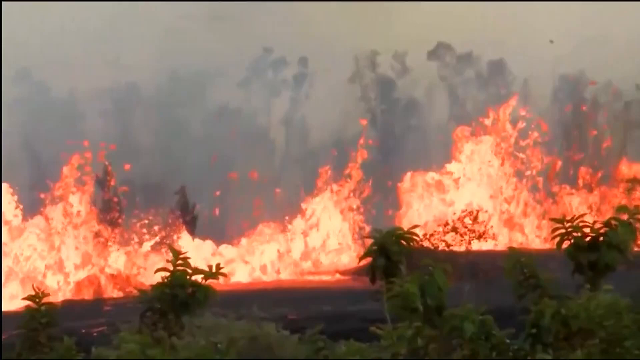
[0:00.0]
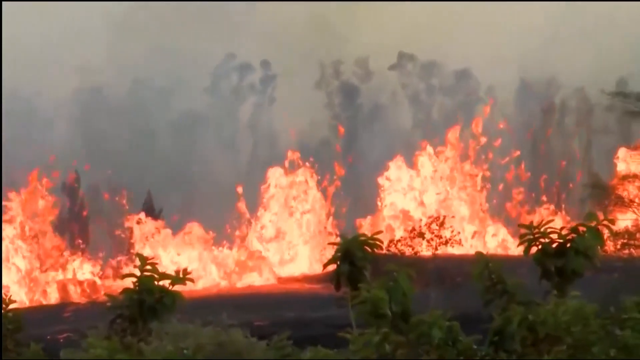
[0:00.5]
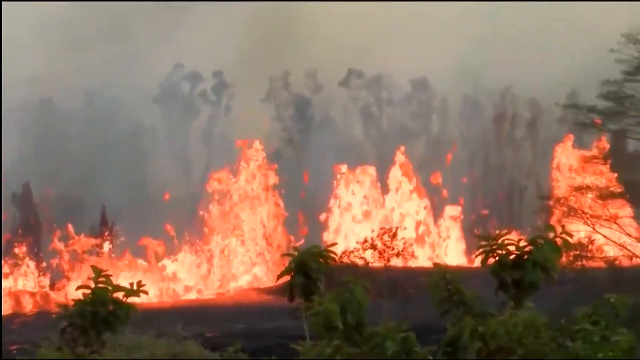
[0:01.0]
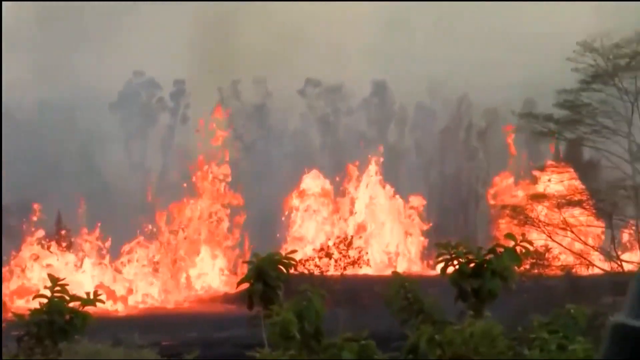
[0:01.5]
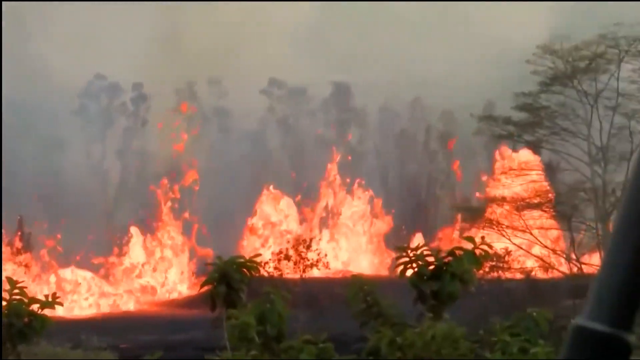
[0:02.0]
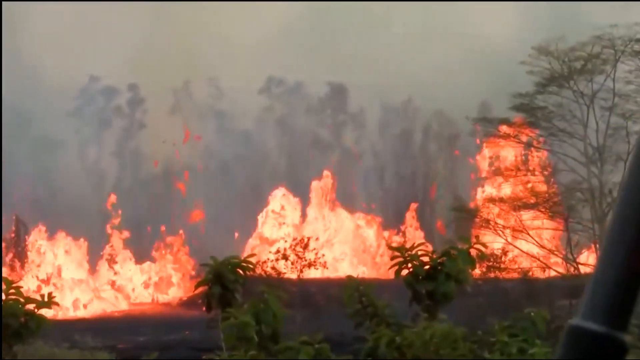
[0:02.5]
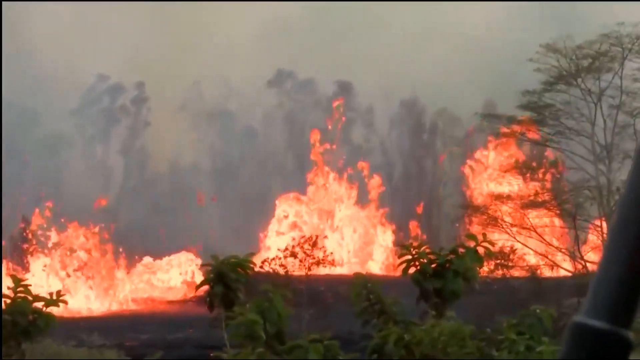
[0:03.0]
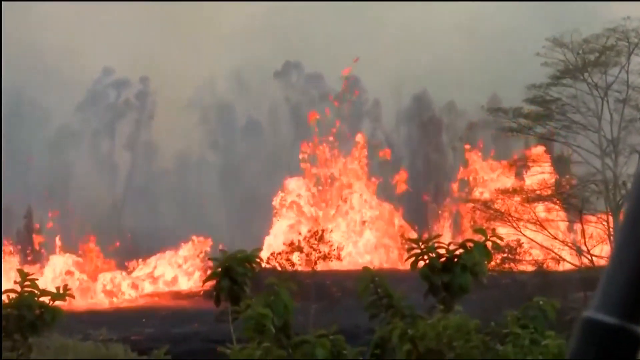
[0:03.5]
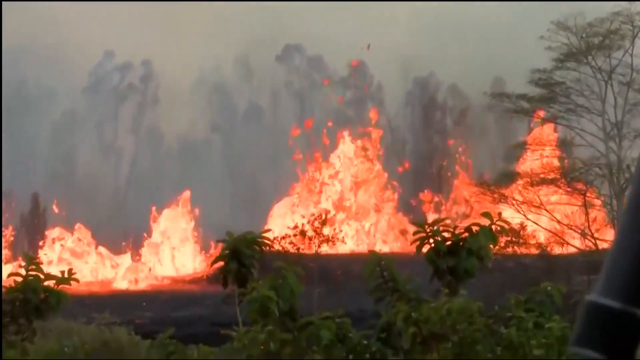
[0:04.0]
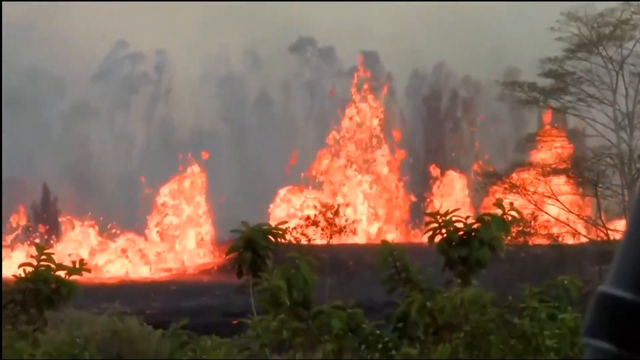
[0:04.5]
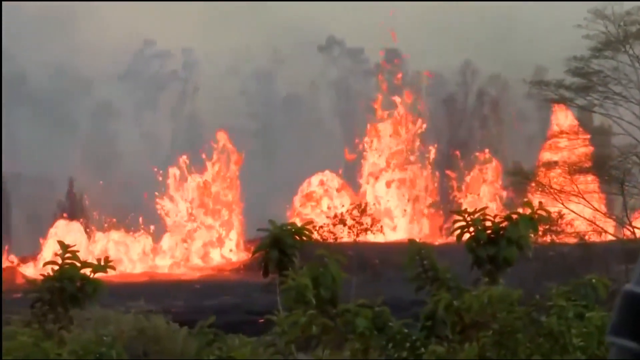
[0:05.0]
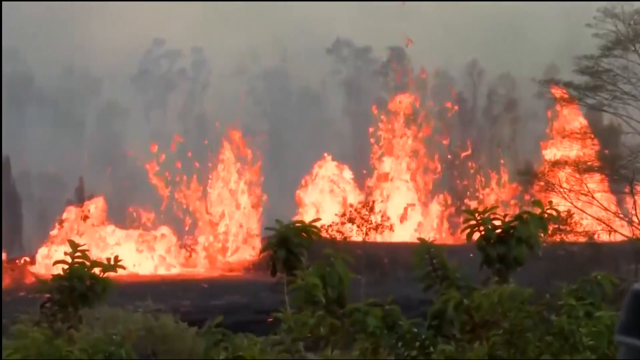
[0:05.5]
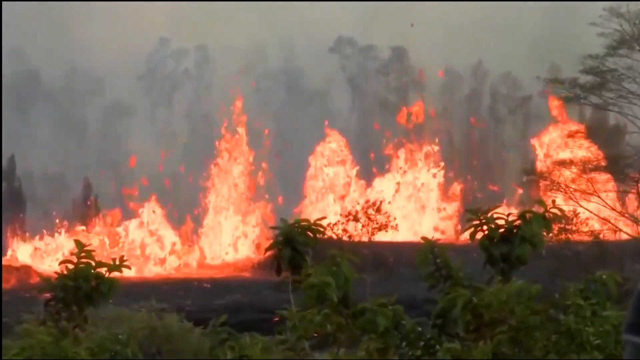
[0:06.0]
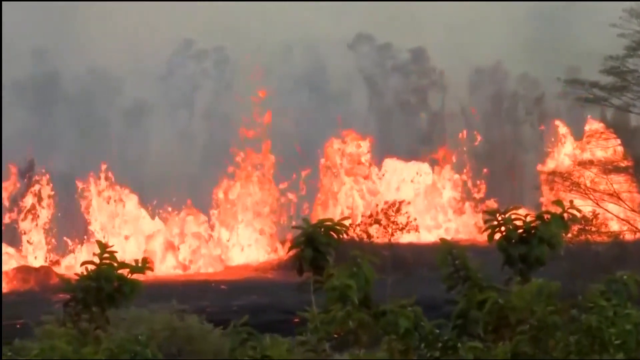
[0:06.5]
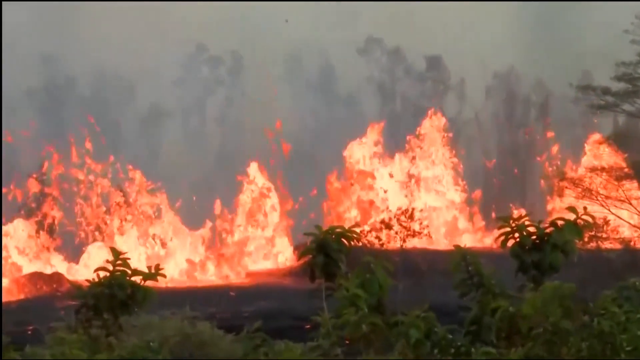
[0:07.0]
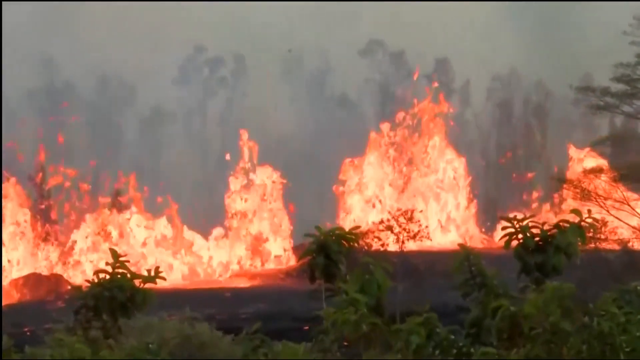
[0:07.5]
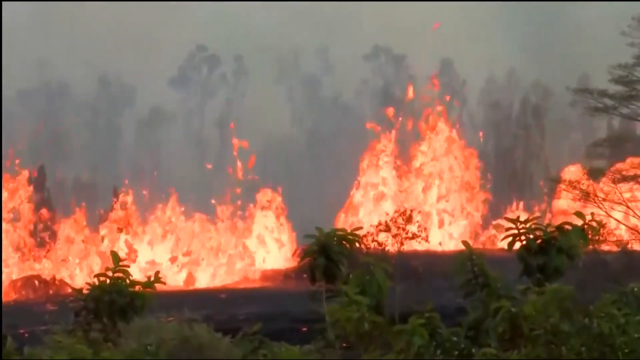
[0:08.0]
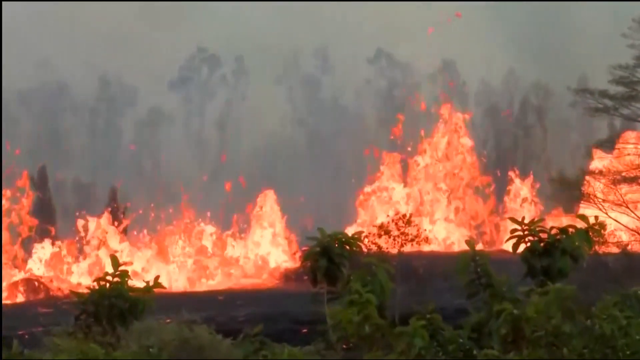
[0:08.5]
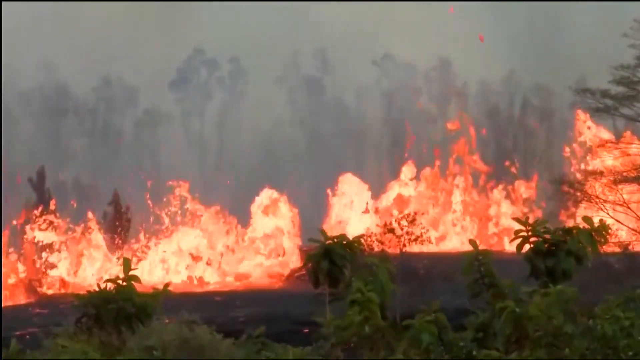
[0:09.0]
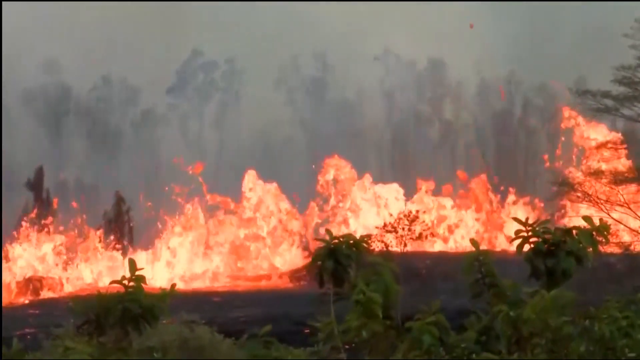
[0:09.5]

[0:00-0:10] The video opens on what appears to be a wildfire, though it looks almost like lava, as the camera pans to the right. There are some trees in the area. The fire is bright orange and yellow and spews out of the ground in at least three different spots. The footage is a bit zoomed in and lower quality. Lots of smoke makes it difficult even to see the trees behind the spouts of fire or lava coming up from the ground.